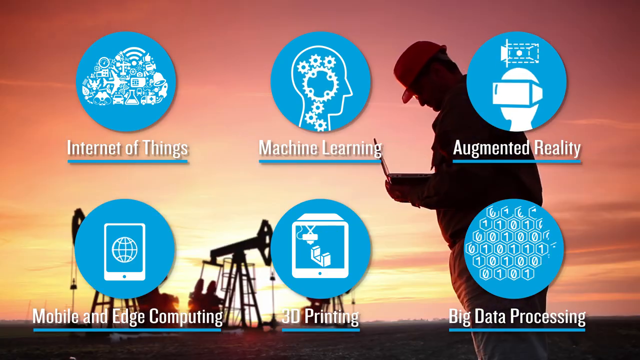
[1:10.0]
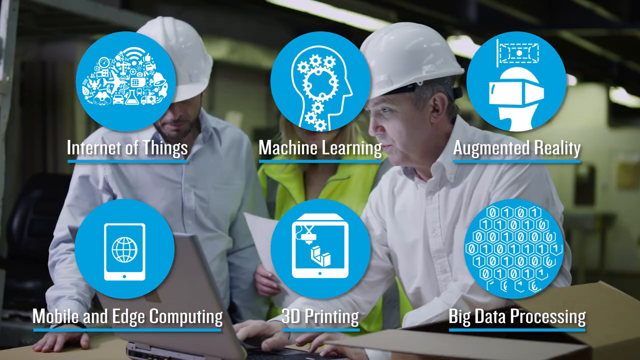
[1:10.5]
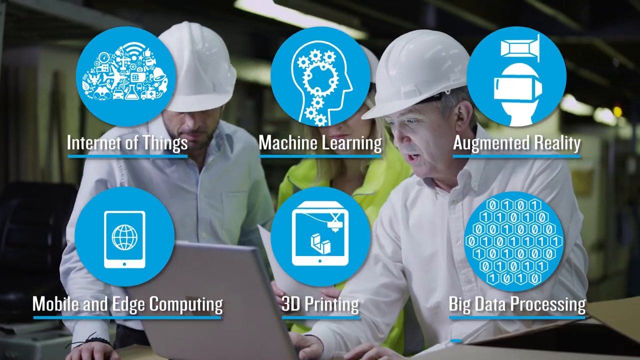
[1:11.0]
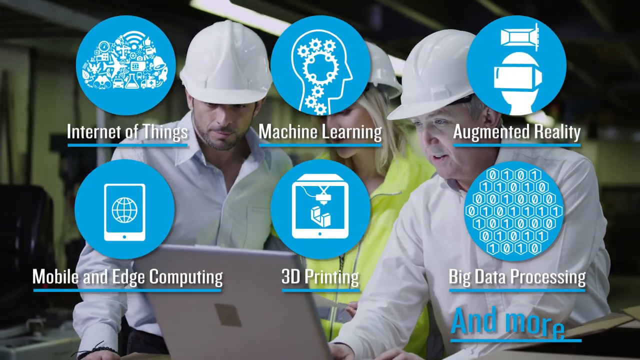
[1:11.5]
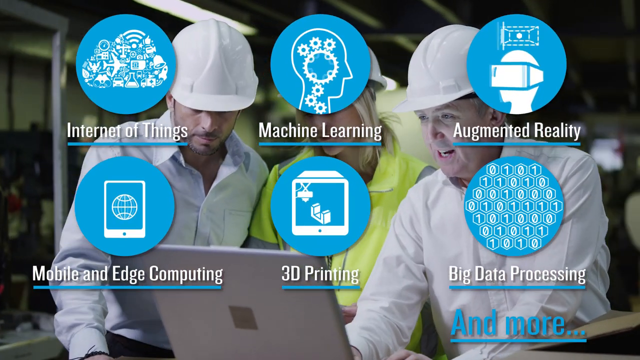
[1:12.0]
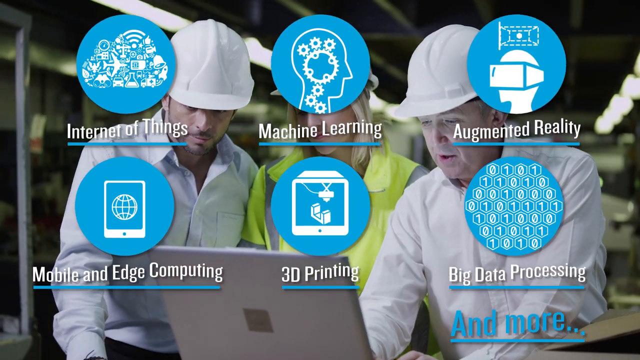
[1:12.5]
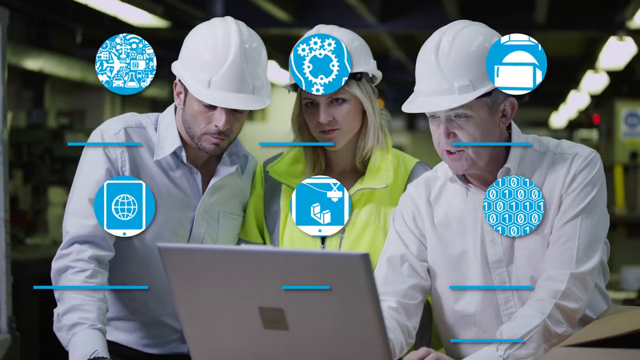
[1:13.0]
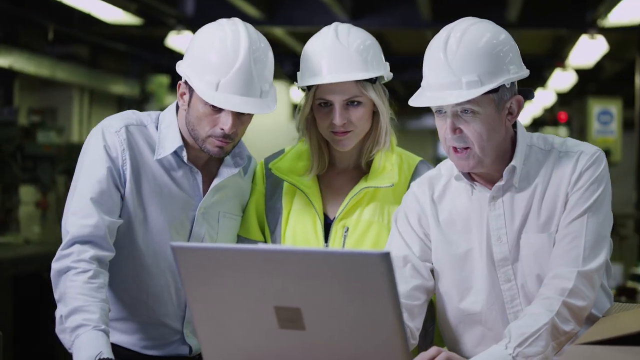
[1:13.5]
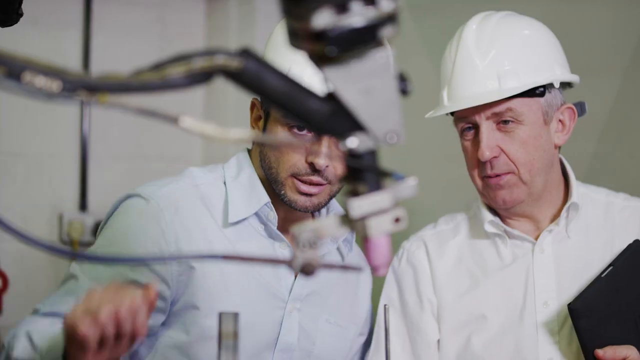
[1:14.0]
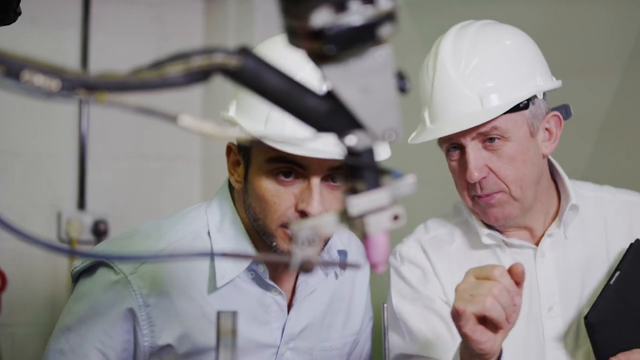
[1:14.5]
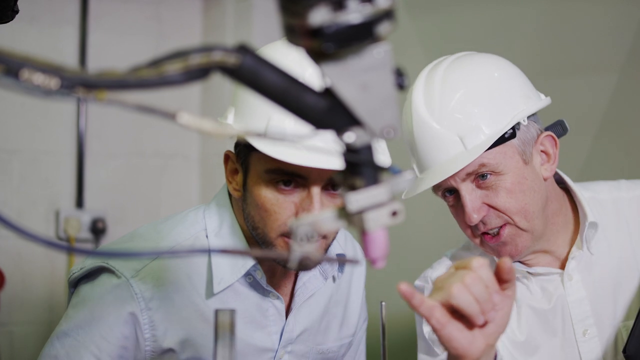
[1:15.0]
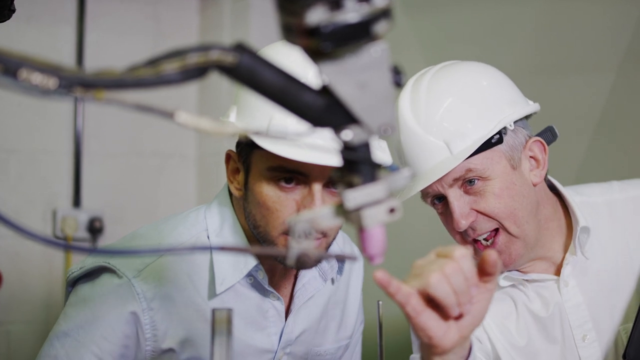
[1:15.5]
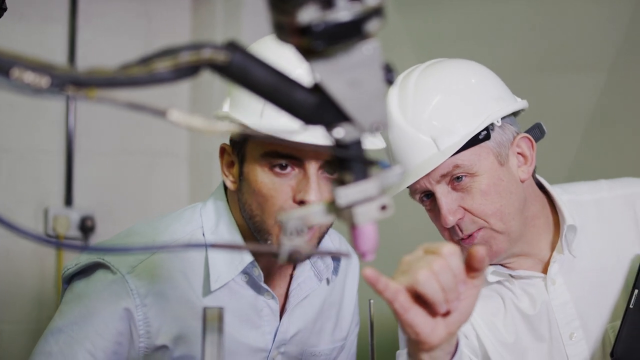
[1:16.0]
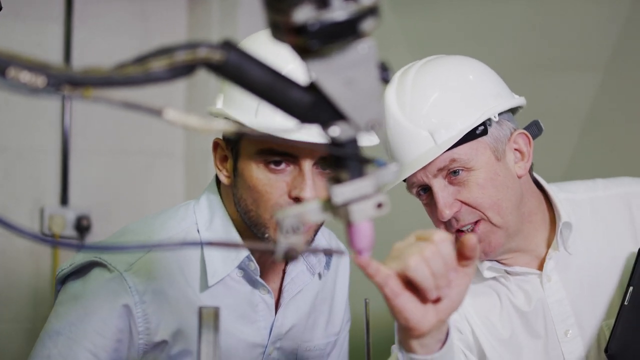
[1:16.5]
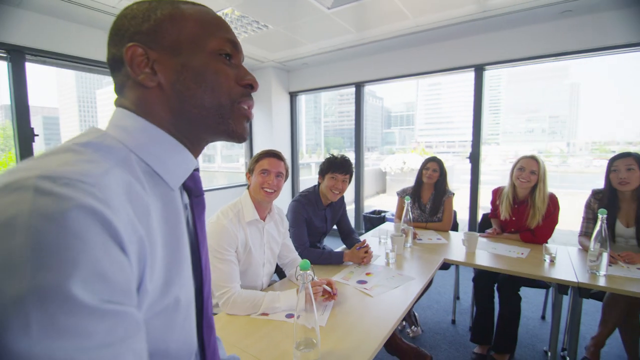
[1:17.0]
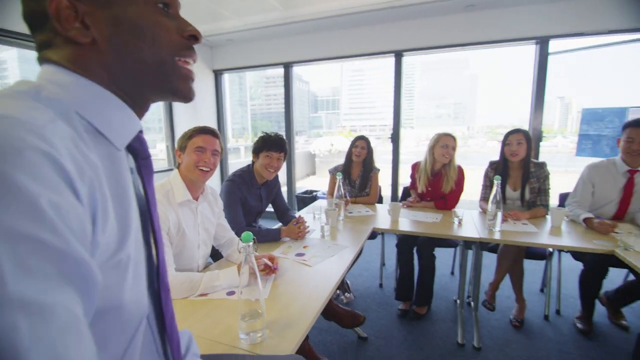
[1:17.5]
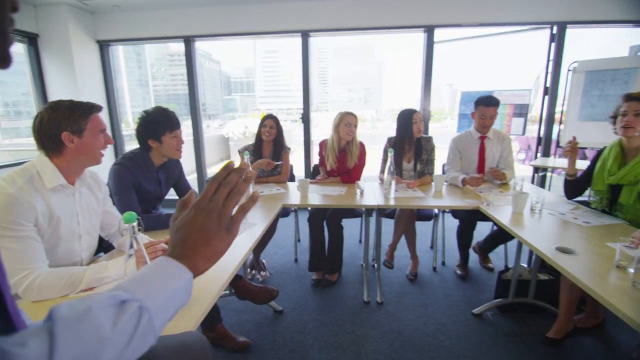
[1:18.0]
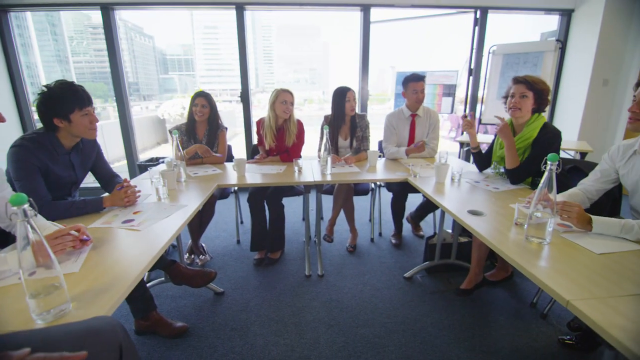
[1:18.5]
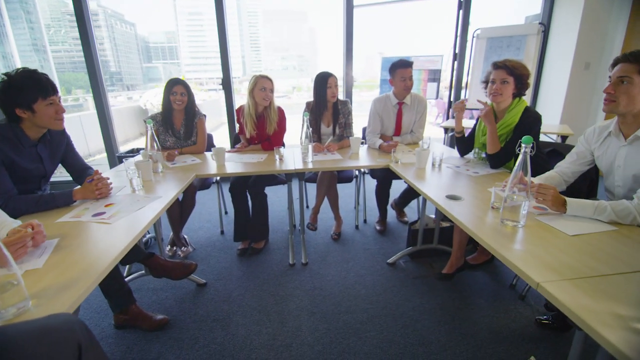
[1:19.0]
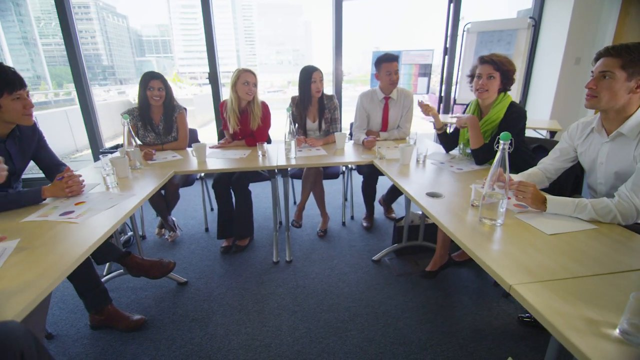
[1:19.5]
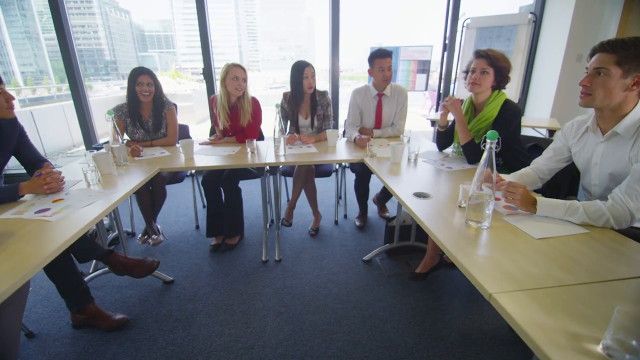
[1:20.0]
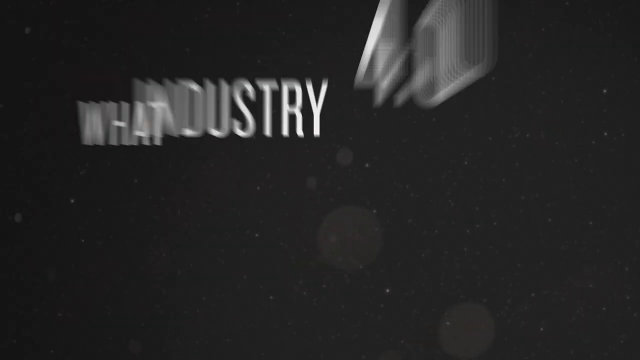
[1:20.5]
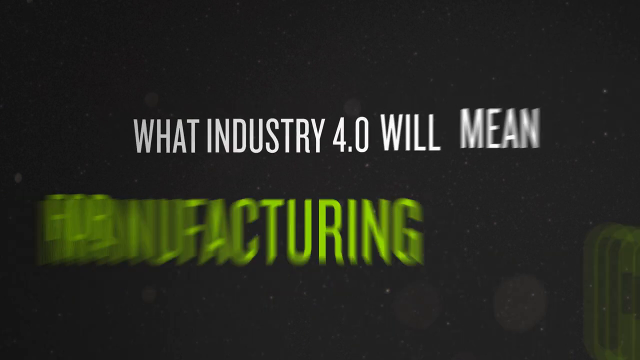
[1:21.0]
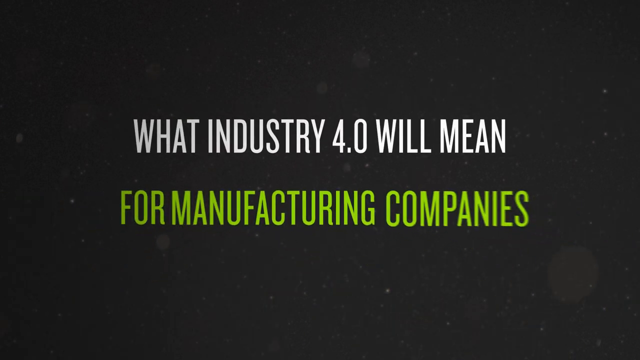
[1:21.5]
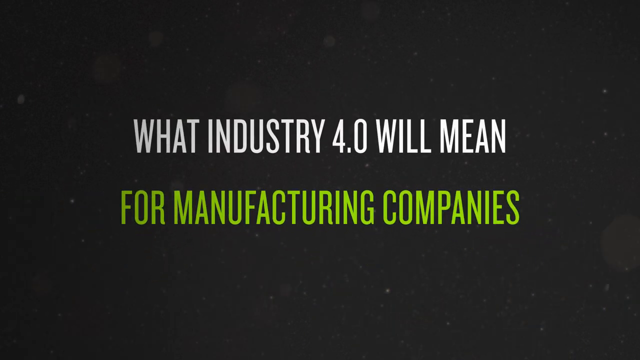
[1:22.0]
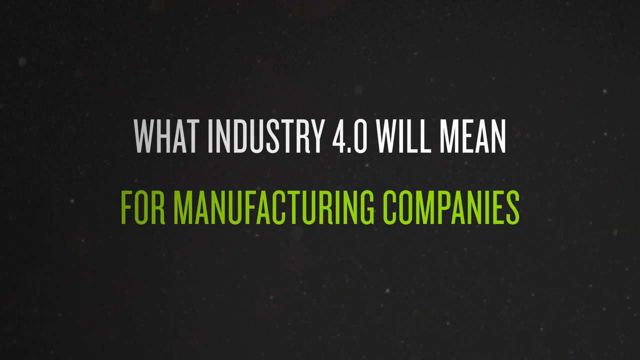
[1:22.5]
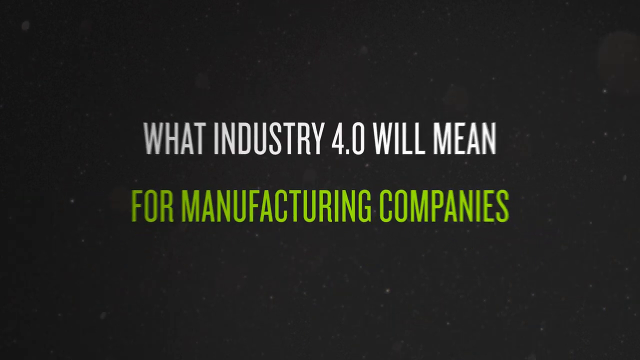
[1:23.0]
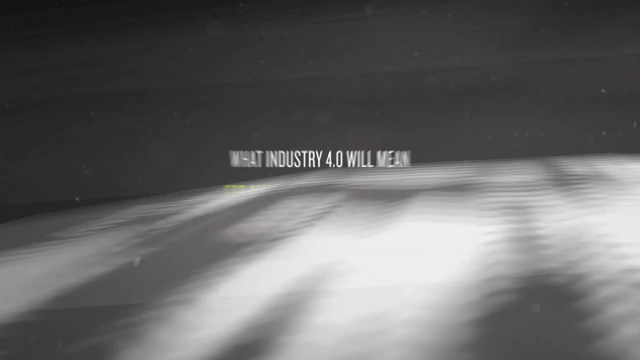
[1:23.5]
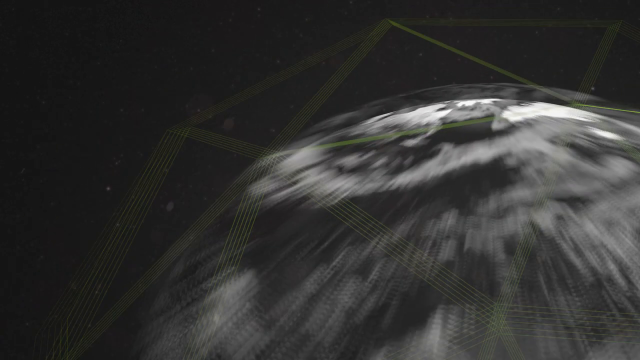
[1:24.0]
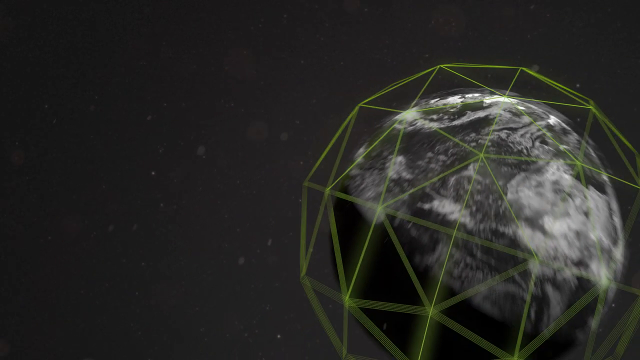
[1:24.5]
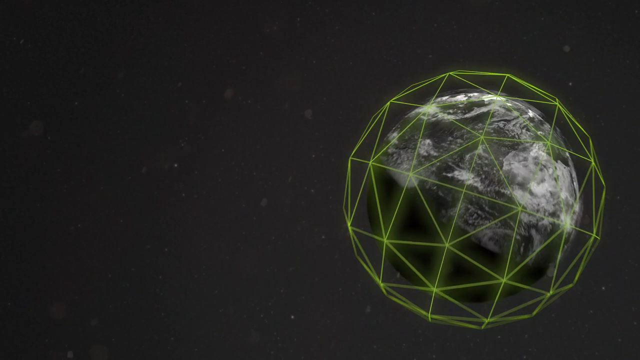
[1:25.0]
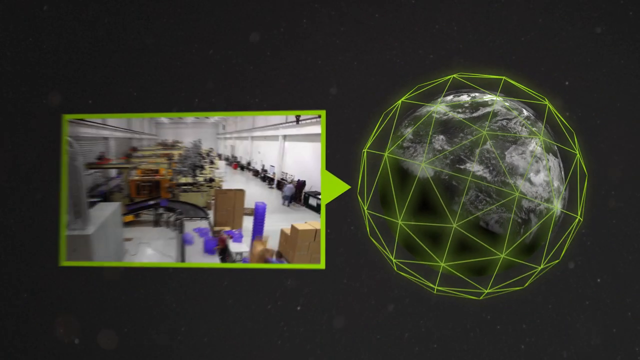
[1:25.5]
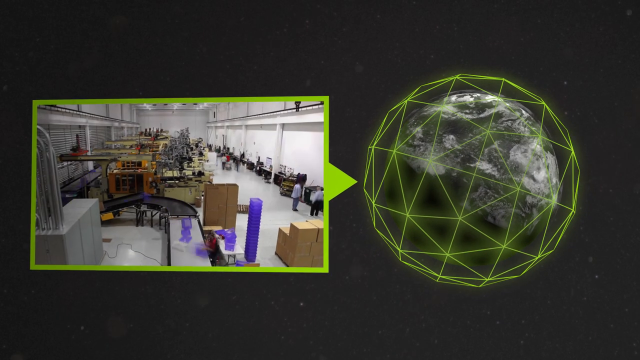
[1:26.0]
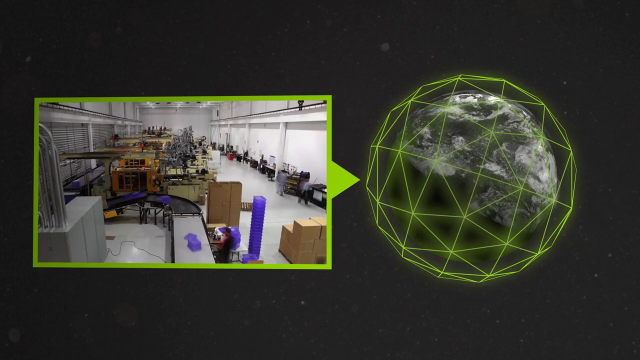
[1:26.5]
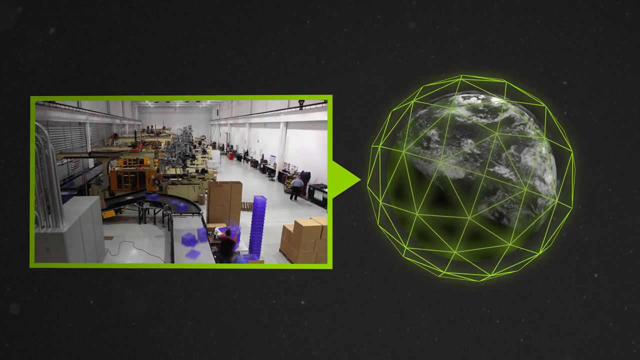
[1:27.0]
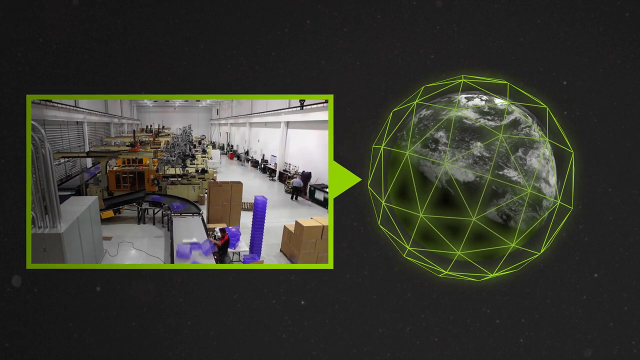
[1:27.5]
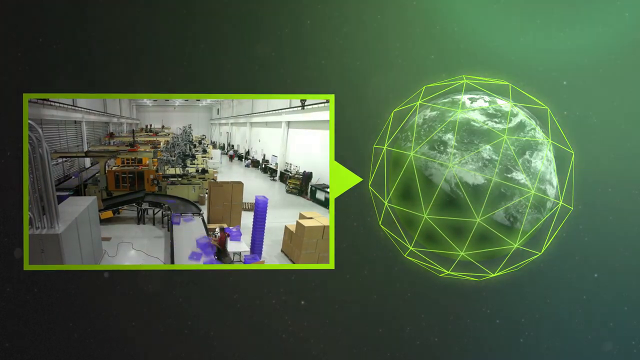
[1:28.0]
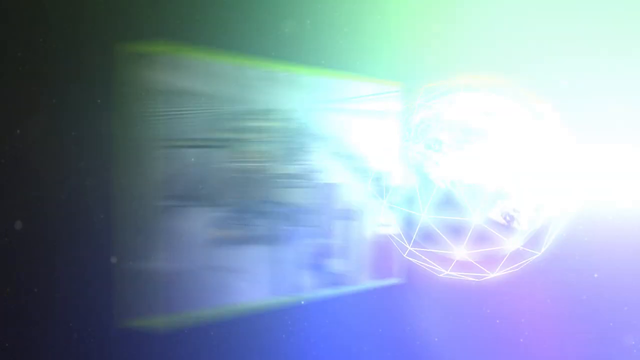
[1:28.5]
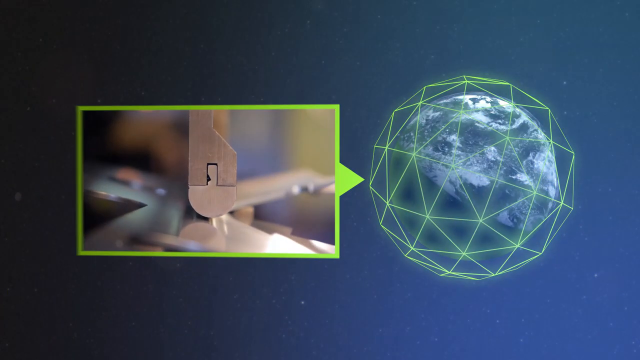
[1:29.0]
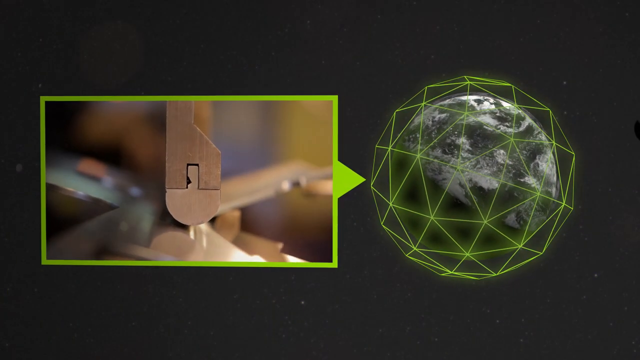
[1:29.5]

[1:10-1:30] A group of people sit behind a U-shaped desk and appear to be talking to each other. A black screen comes up that says "what industry 4.0 will mean for manufacturing companies?" The video then changes to another black screen where a planet comes up, with changing images beside it. There almost looks to be a cage over top of this planet or meteor. The images beside the gray circle change over time as the cage around the object changes as well, and the screen becomes brighter as a flashing light goes off behind the gray circle.